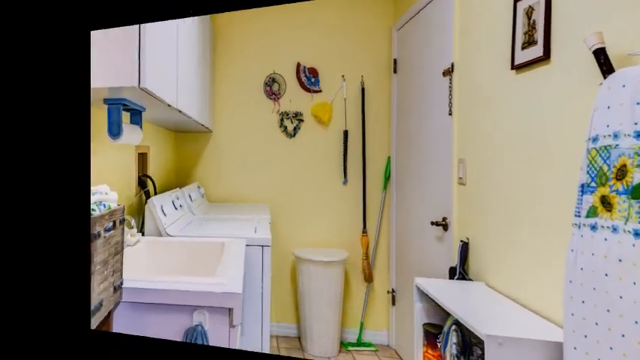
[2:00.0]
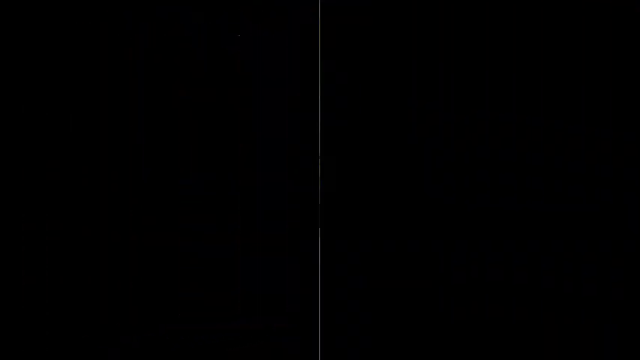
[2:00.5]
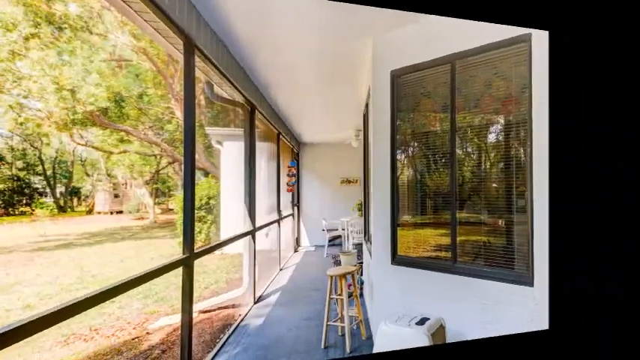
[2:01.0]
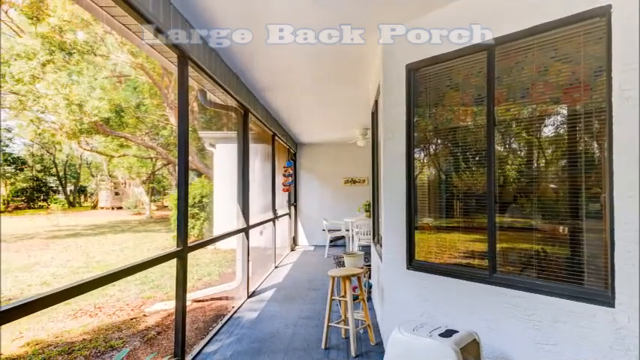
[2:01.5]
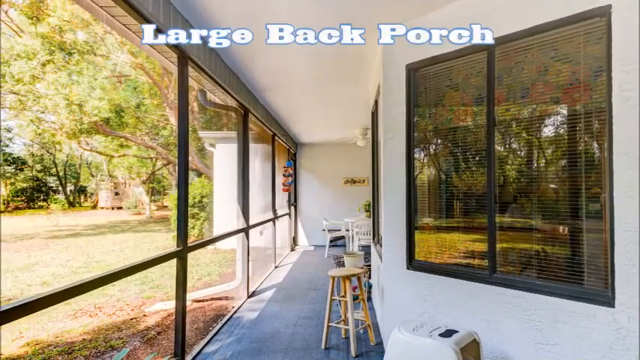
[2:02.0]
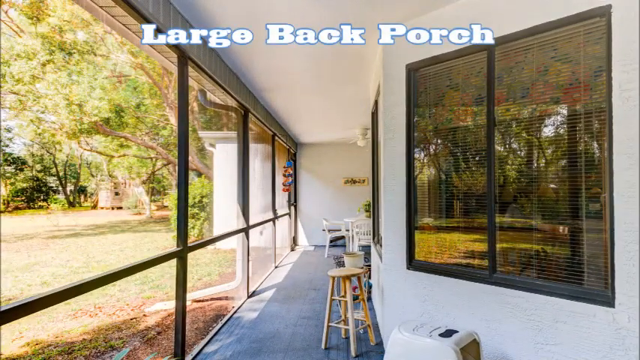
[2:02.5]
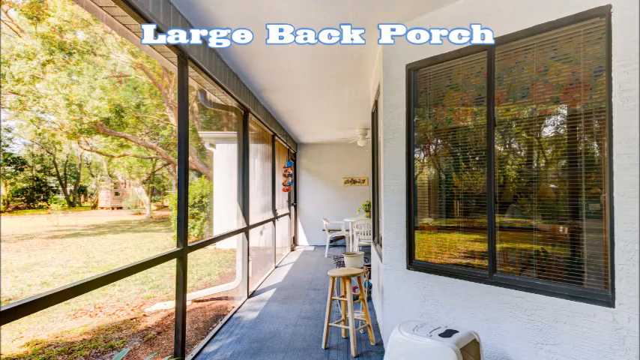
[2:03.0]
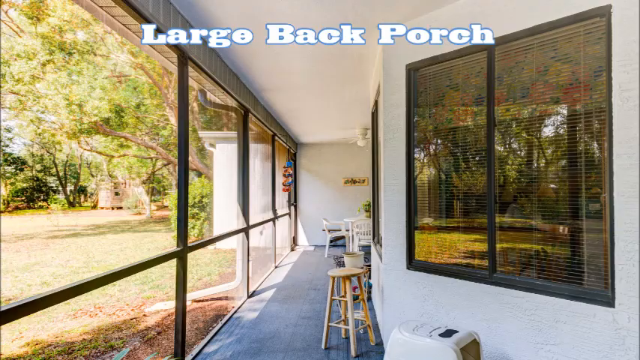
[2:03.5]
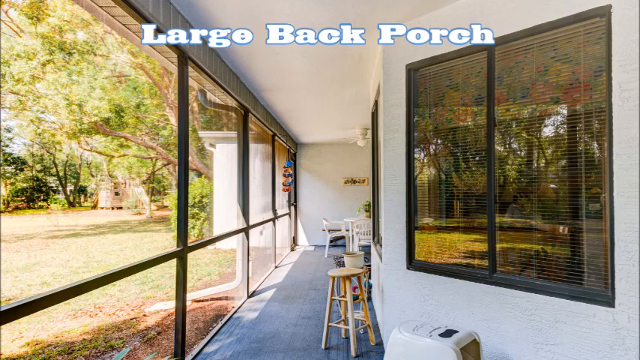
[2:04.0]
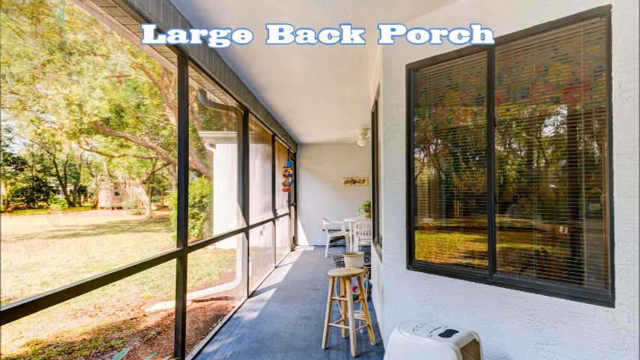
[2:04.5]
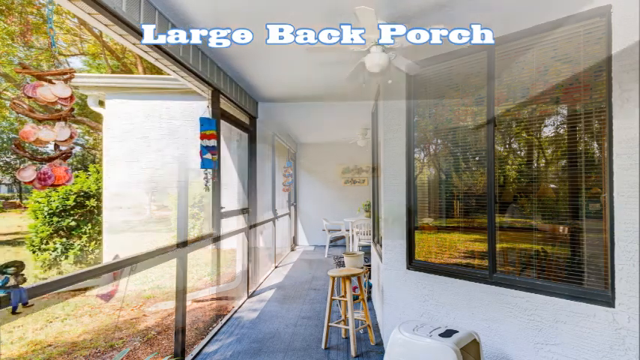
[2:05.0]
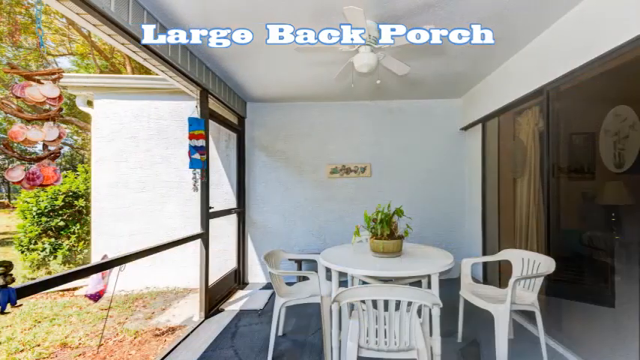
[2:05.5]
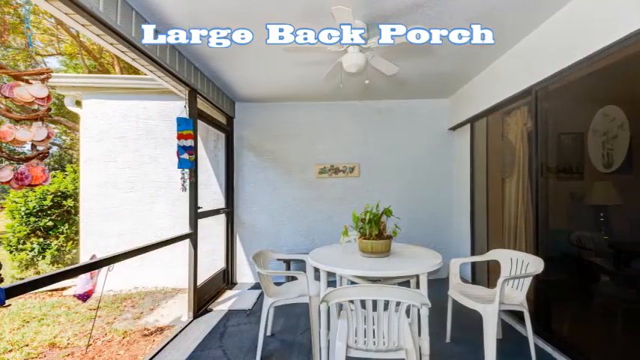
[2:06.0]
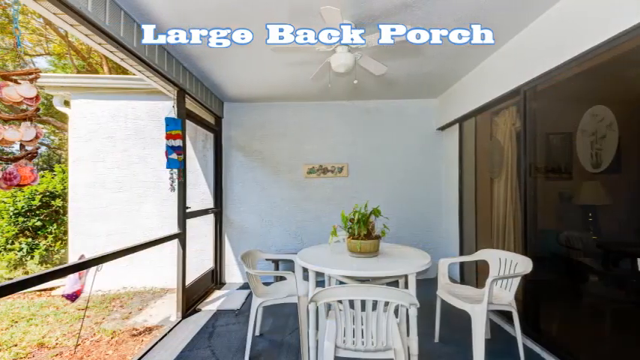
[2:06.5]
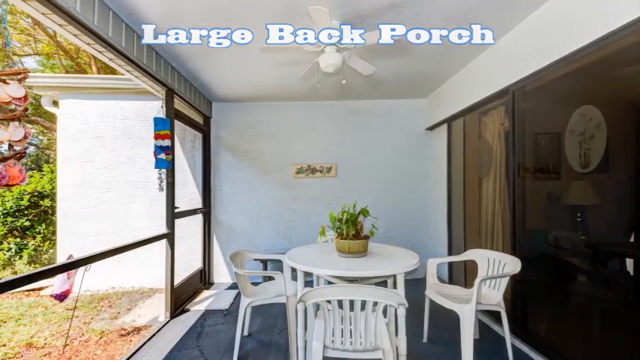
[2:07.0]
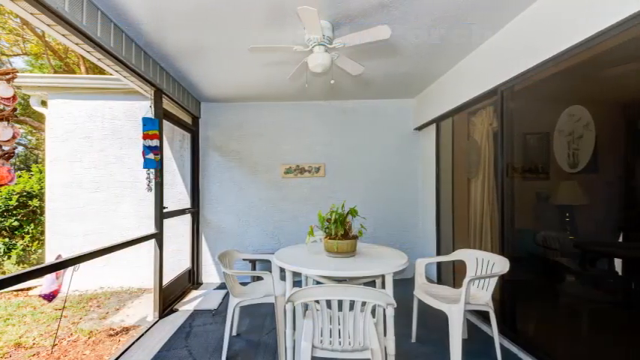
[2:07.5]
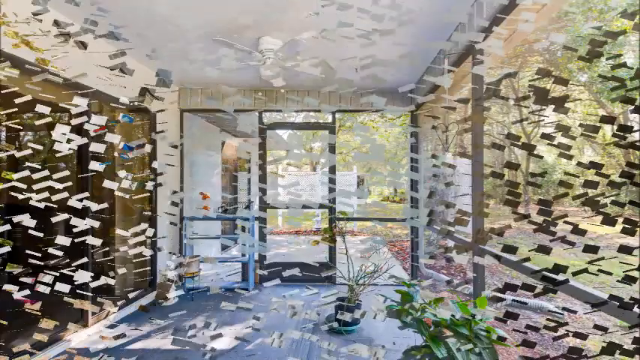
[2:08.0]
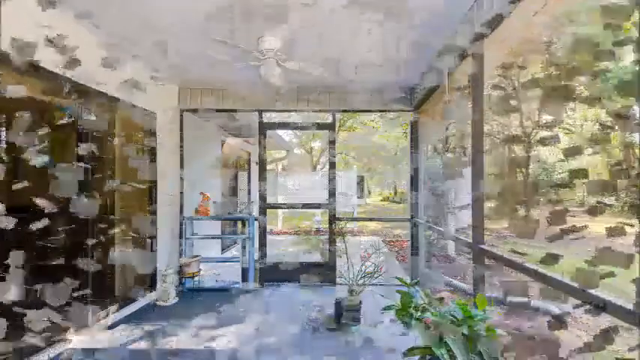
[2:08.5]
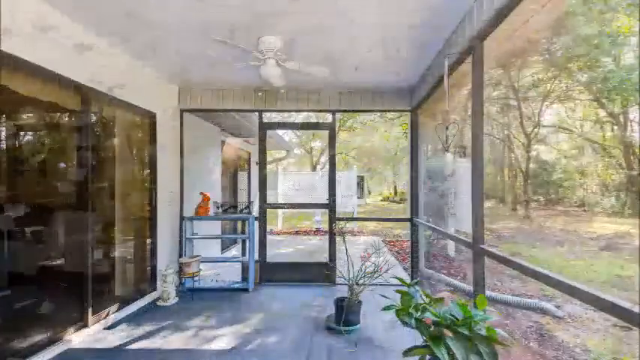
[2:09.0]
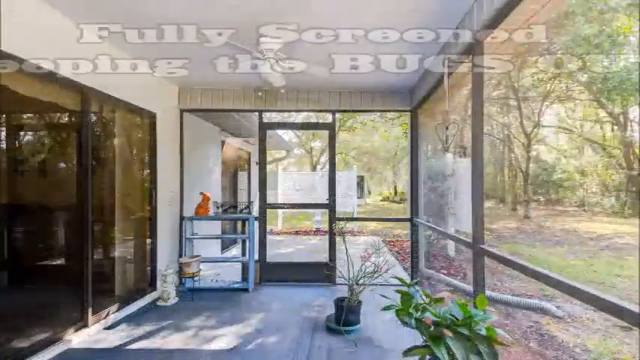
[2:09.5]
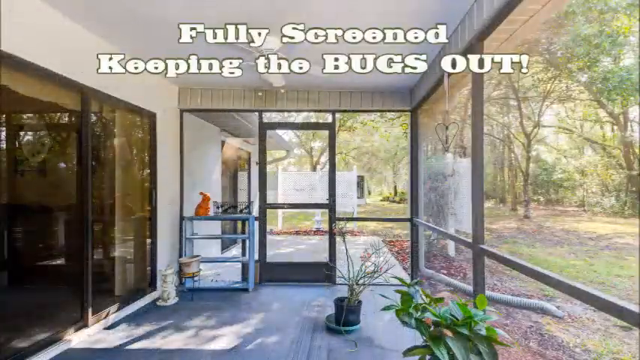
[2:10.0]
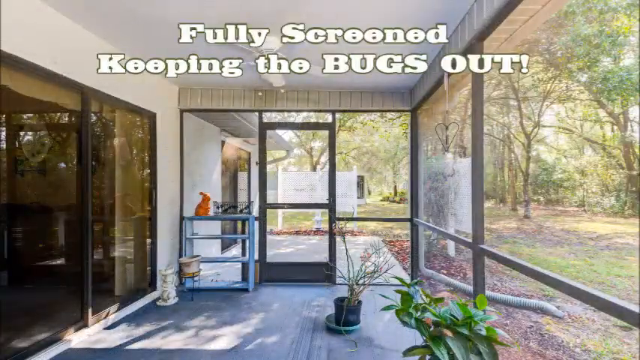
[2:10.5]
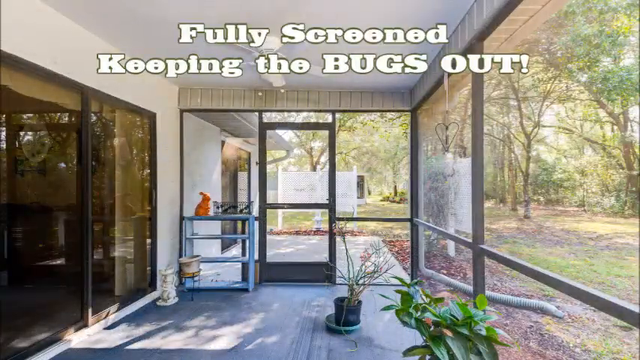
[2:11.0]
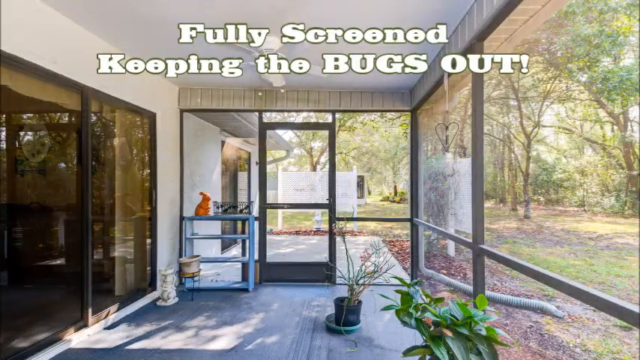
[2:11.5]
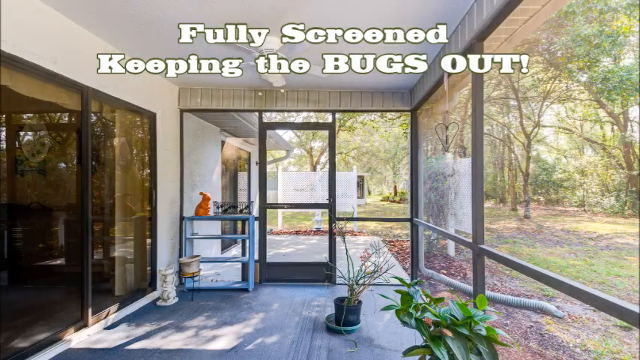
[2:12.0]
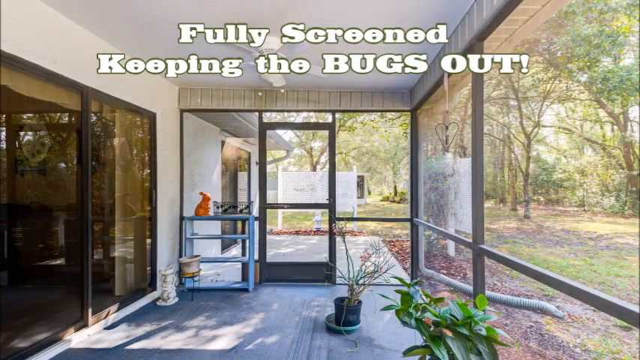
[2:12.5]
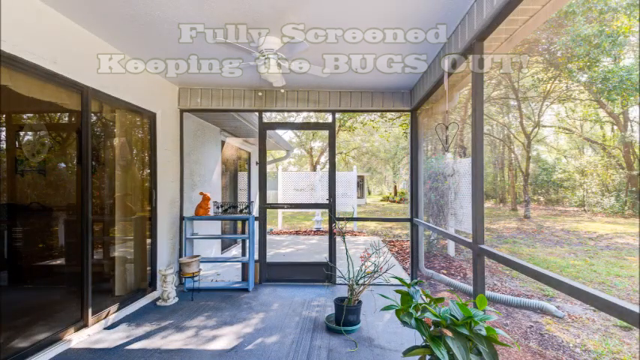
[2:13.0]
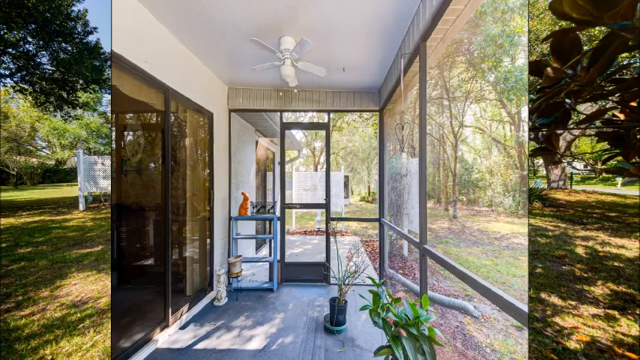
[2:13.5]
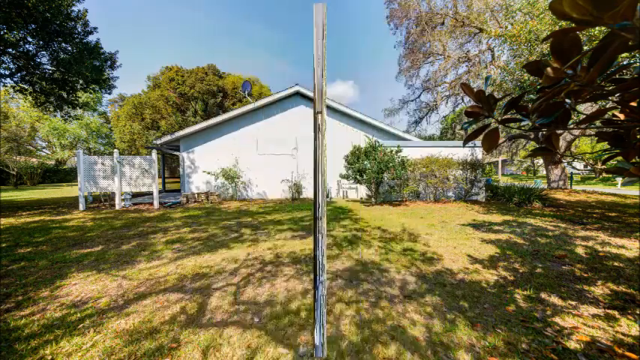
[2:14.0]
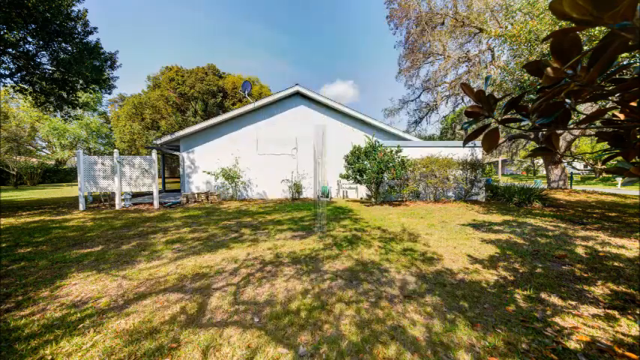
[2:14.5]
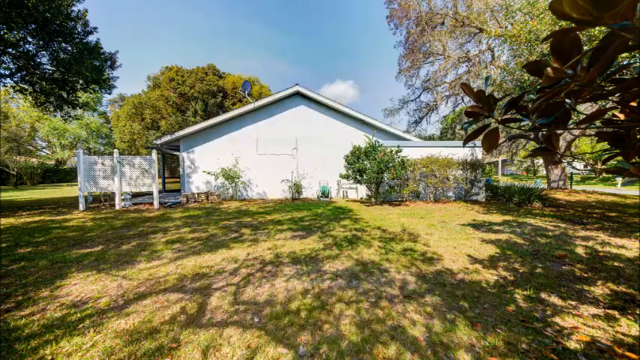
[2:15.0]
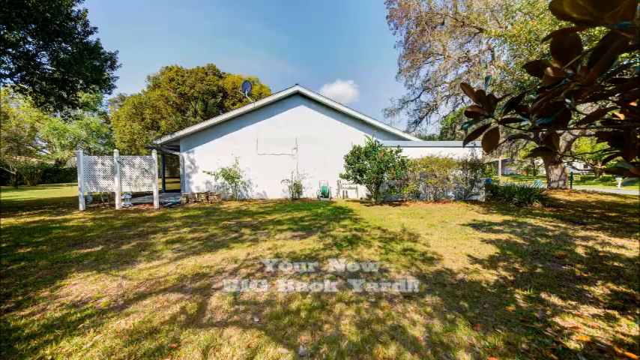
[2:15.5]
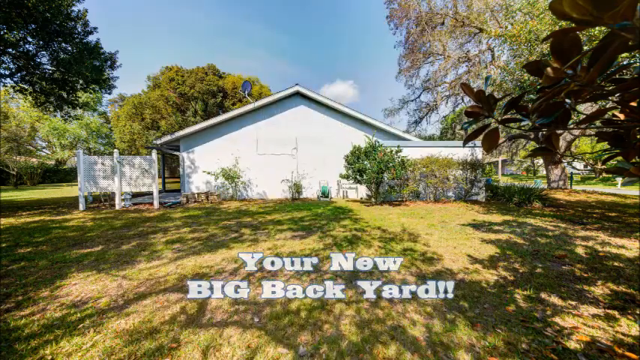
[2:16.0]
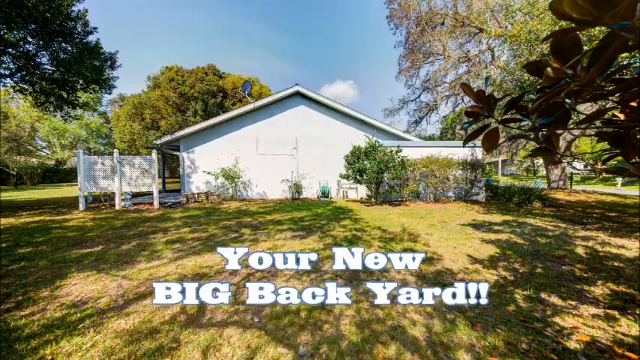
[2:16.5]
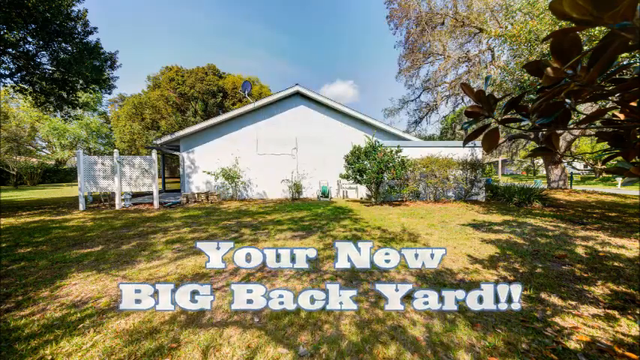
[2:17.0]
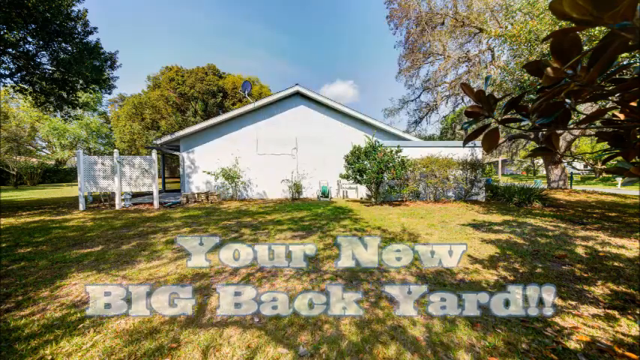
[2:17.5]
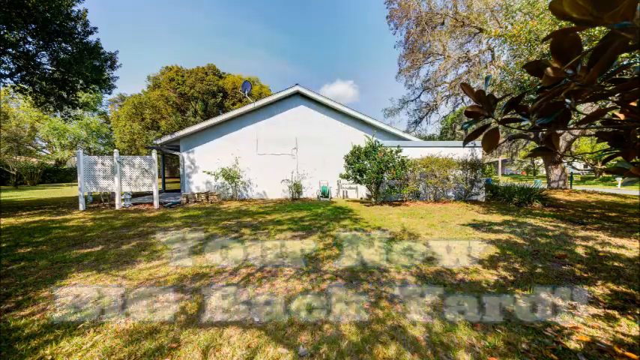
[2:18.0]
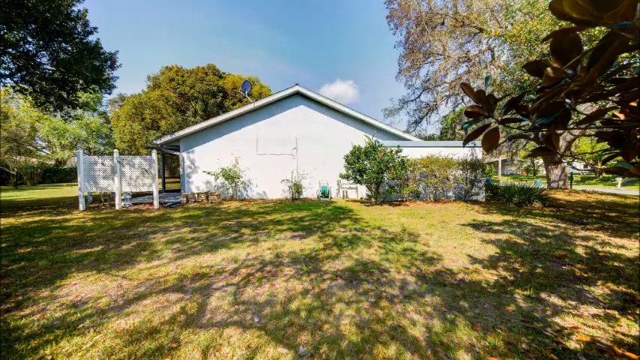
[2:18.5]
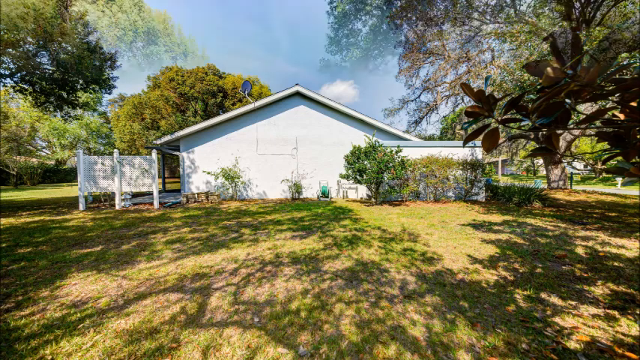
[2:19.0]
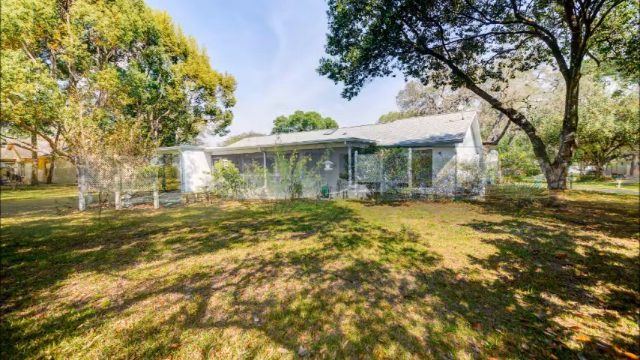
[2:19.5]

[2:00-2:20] The video focuses on the large back porch, which appears relatively narrow but runs the length of the house. It is fully screened, and text notes that it is screened to keep the bugs out. On the porch there is a seating area with some benches, what look like some flowerpots, and a round table with four white chairs around it. There are some shelves with what looks like an orange rabbit on top. The view pans to the backyard, which is kept up pretty well. There are some plants near the back of the house, which is white, and a white privacy-type fence near the house. To the right of the house as seen on screen is a very large tree. The sky is very blue with some wispy clouds, and quite a few trees are in view, so it looks like an established neighborhood. Transitions between views make the background look like it shatters, and highlighted words fly out of the view toward the viewer. At the very end, the video pans to look again at the front of the house.